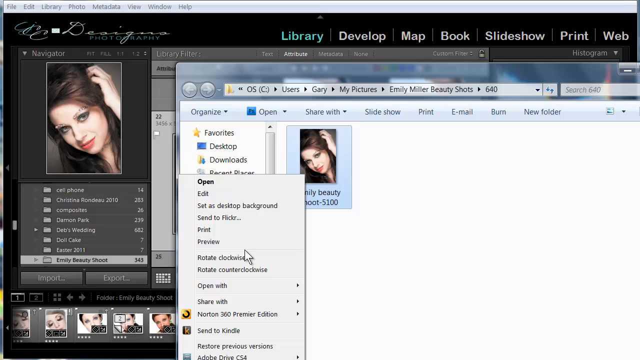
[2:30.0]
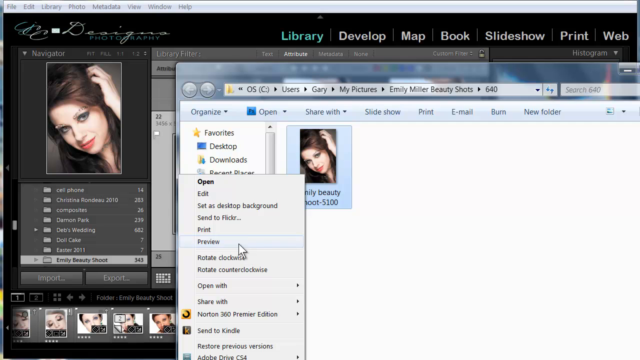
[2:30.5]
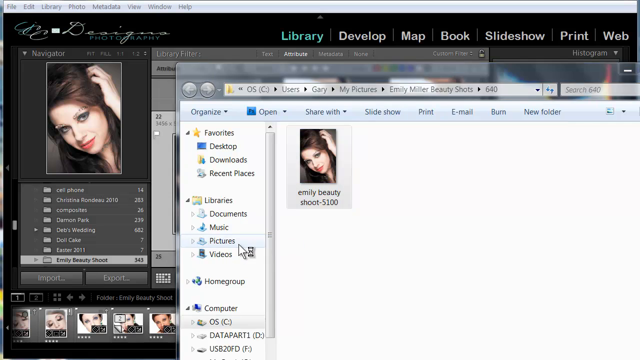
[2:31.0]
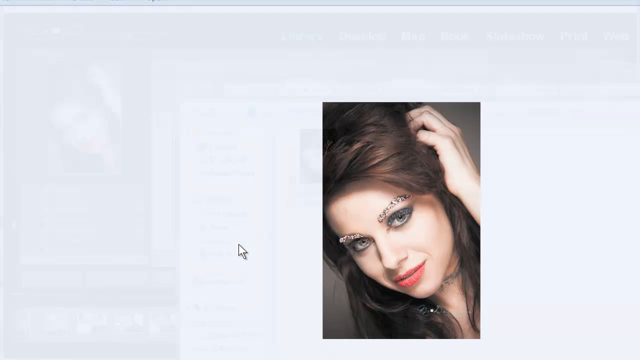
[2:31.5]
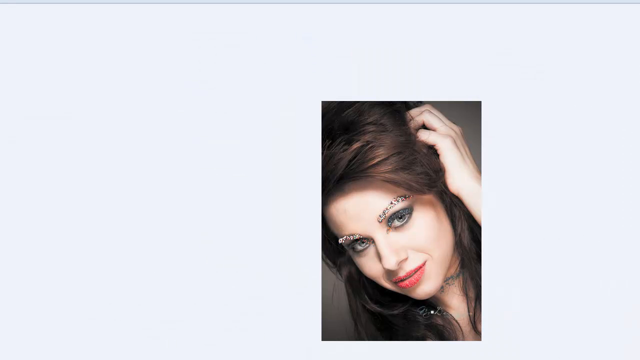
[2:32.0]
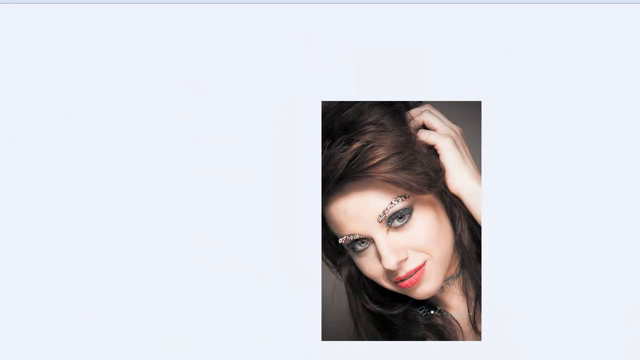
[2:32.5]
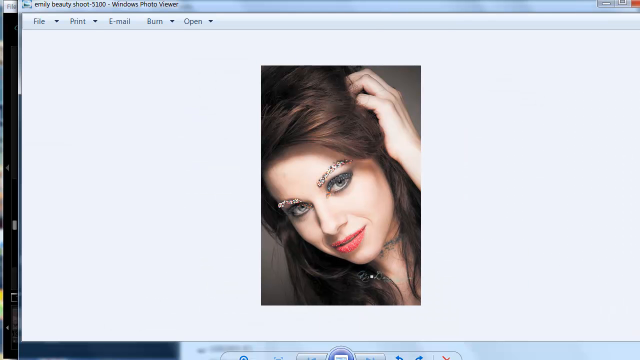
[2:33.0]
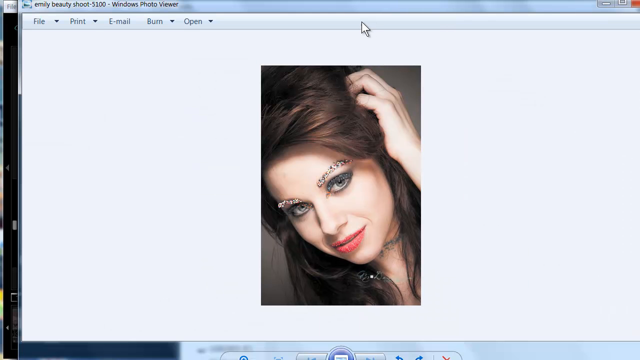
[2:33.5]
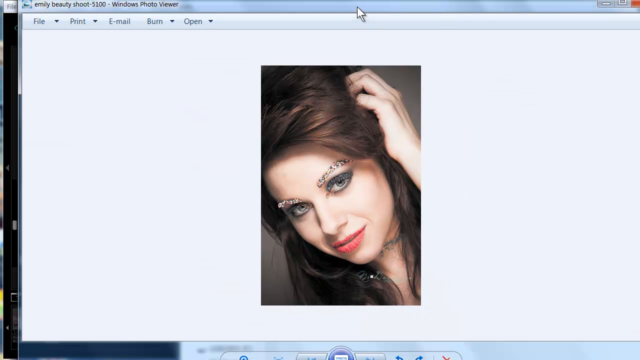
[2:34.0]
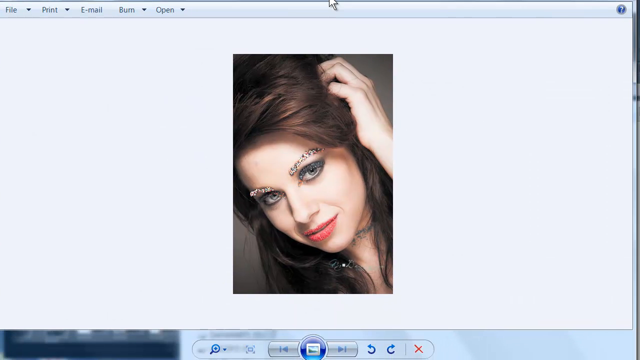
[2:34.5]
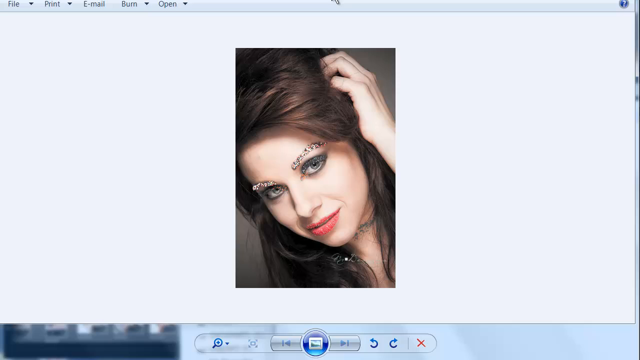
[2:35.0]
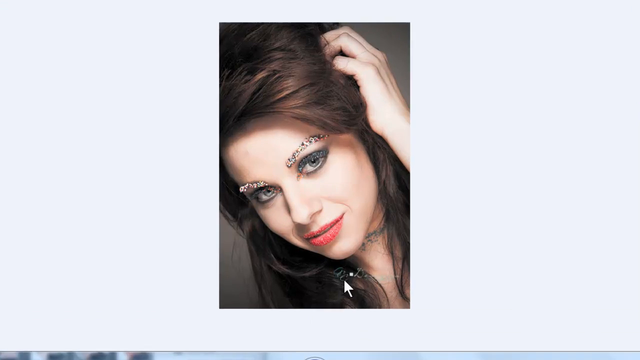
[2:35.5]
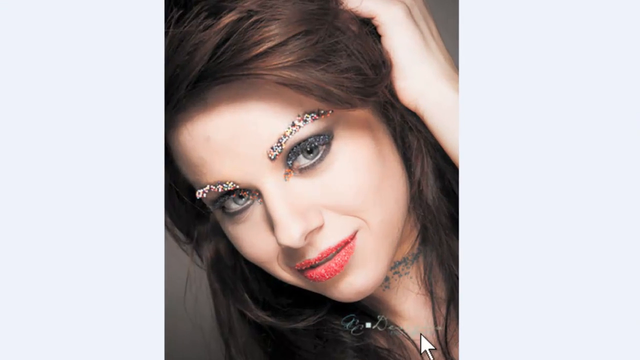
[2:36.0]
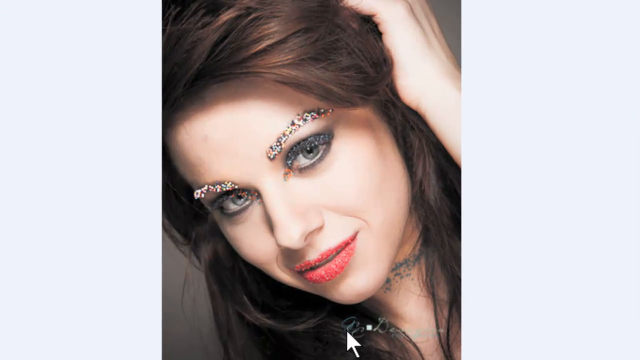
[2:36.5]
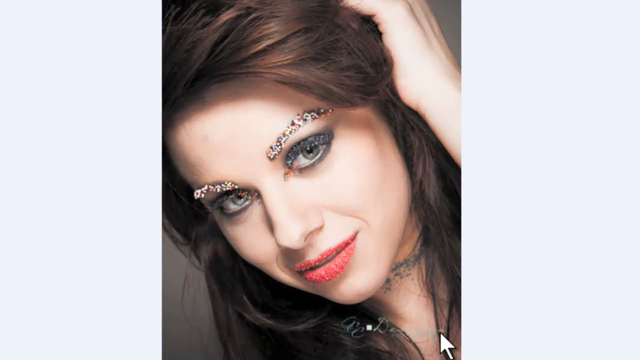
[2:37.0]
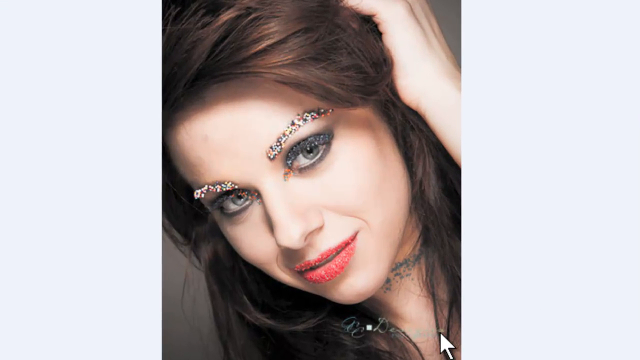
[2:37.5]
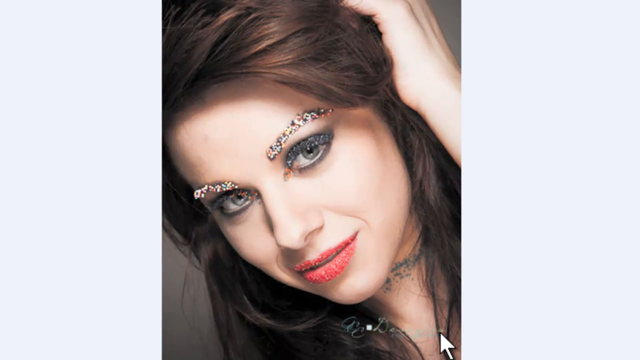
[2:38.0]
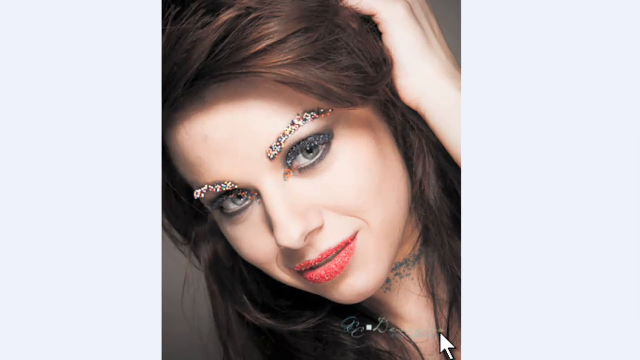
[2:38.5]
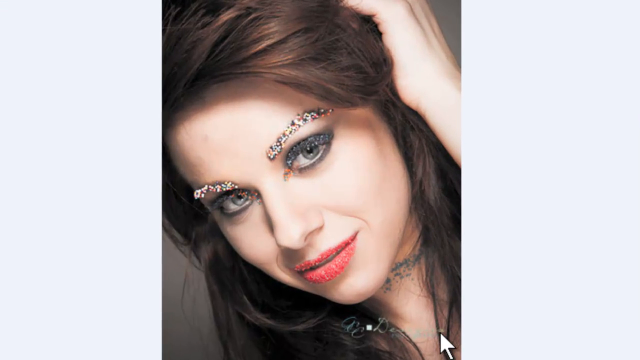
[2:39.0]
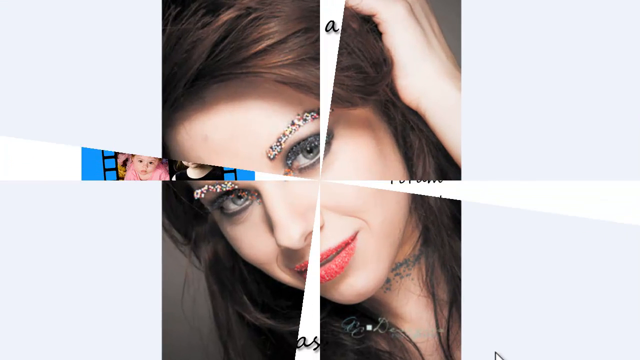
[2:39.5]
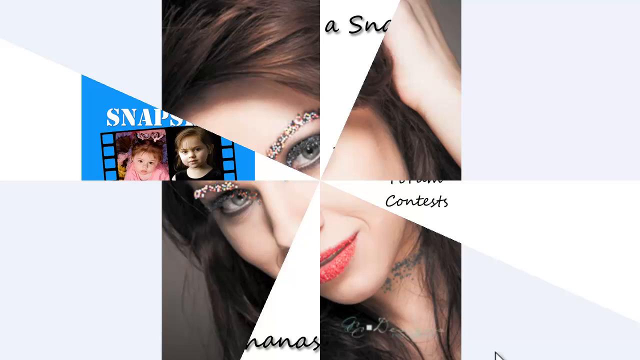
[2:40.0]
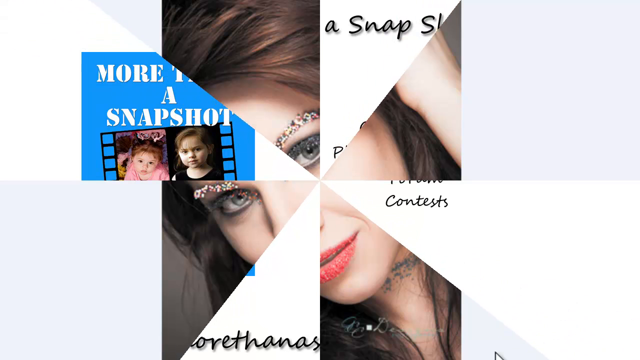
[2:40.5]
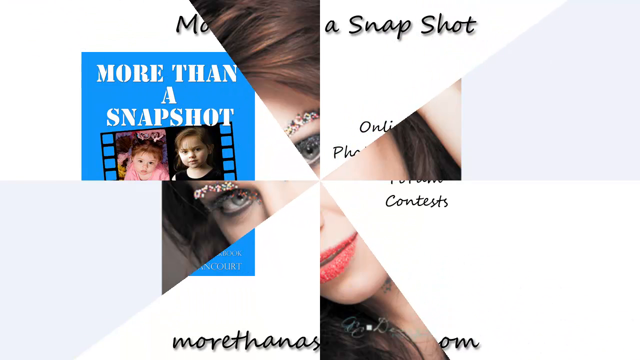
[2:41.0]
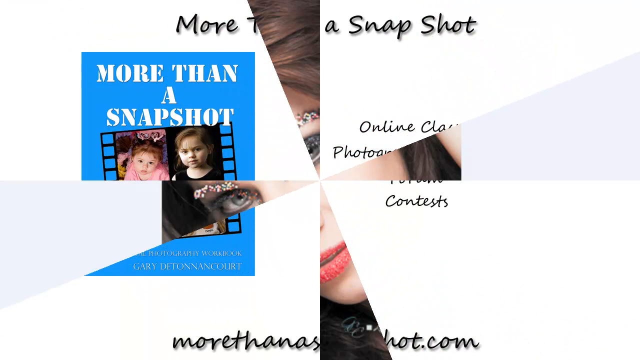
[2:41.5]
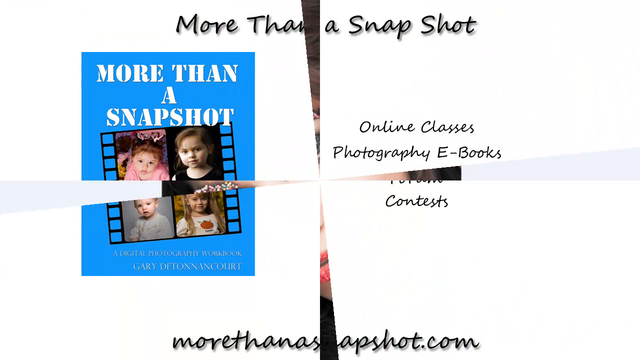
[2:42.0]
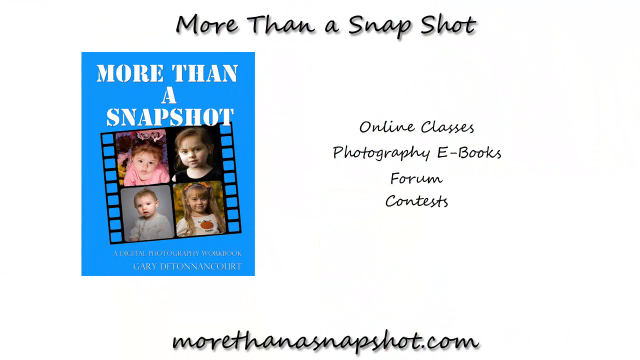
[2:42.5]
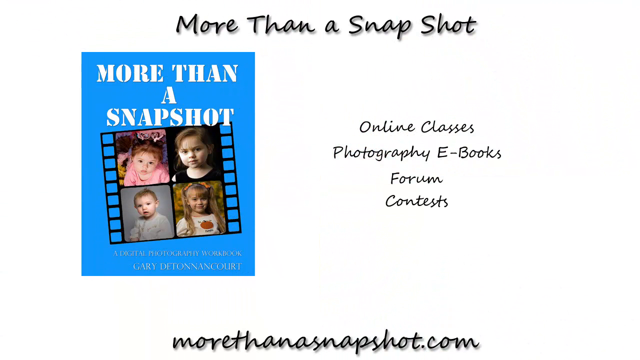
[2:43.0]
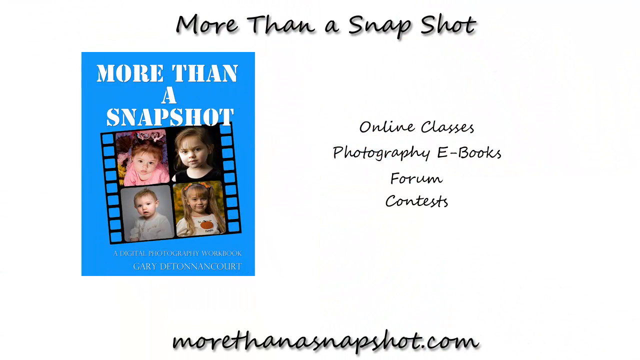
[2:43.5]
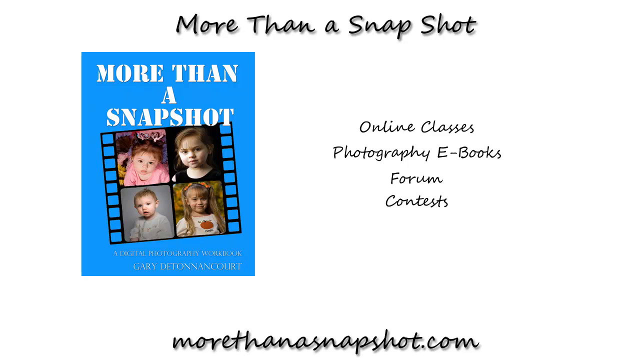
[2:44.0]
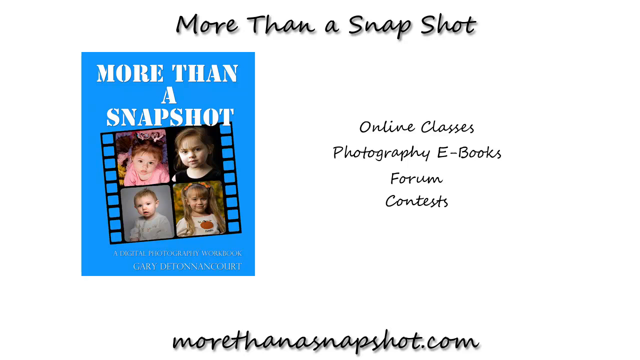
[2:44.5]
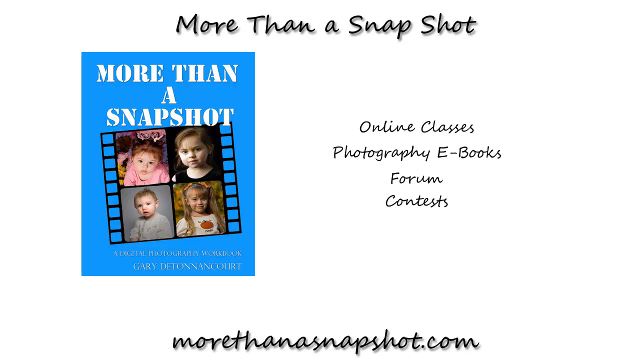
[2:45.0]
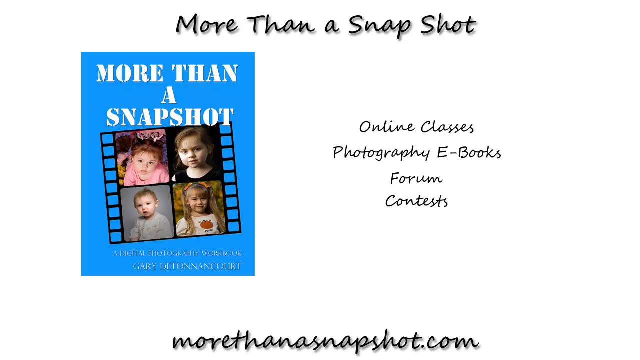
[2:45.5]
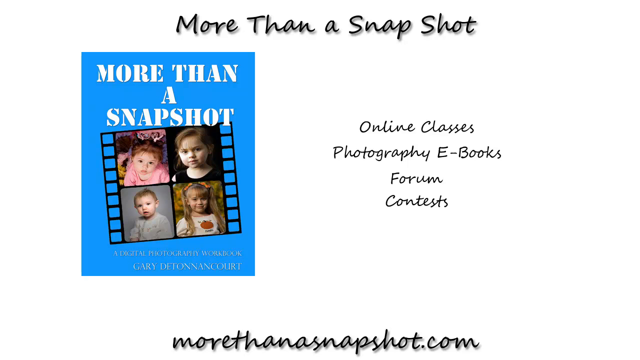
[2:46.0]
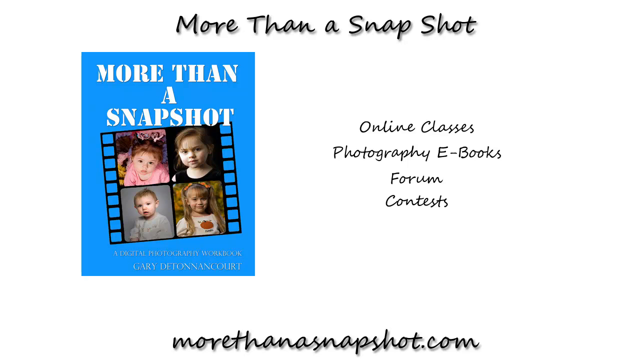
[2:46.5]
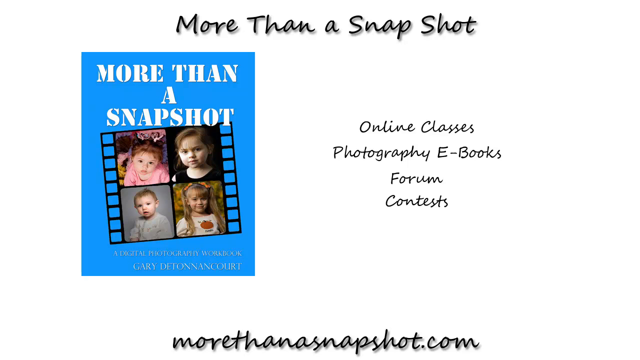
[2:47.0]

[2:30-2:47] The user is in what appears to be the computer's file explorer, in the Pictures folder, inside a folder called Emily Miller Beauty Shots and a folder within it called 640, where there is an image named Emily Beauty Shot 5100. After right-clicking the image and choosing to open it, the image opens full screen in a preview window: a headshot of a woman leaning with her hand on her head. She has full red lips and long brown hair that goes at least past her chin. The user moves the preview window around, then zooms right into the image, giving a closer view of the model's face, with jewel-encrusted eyebrows, eyelashes and full lips, and the watermark in the bottom right corner. The video then transitions to what appears to be a presentation screen that is bright white, titled "more than a snapshot" at the top. Below is a graphic and a blue rectangle that also says "more than a snapshot", containing a film strip with four images of young children. To the right is a list reading "online classes", "photography ebooks", "form" and "contests". At the very bottom is the individual's name as a .com website address.